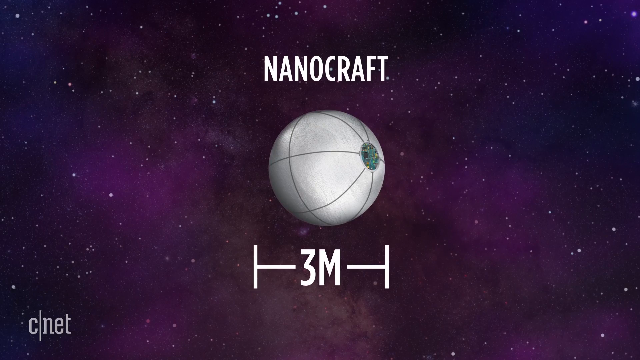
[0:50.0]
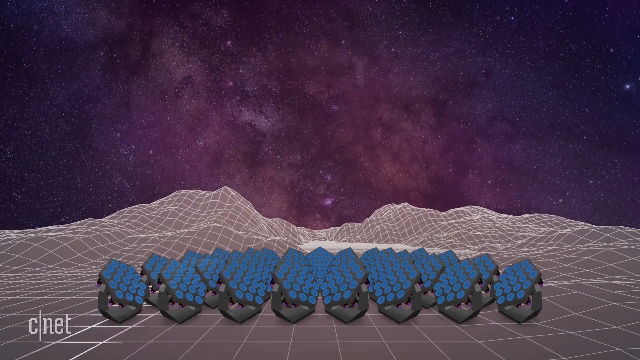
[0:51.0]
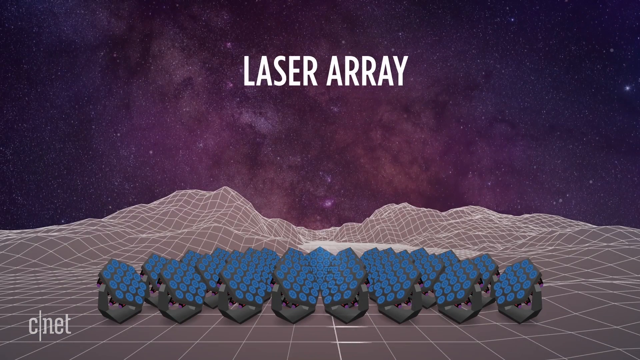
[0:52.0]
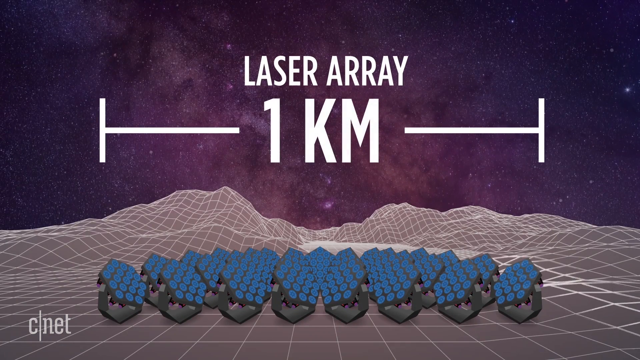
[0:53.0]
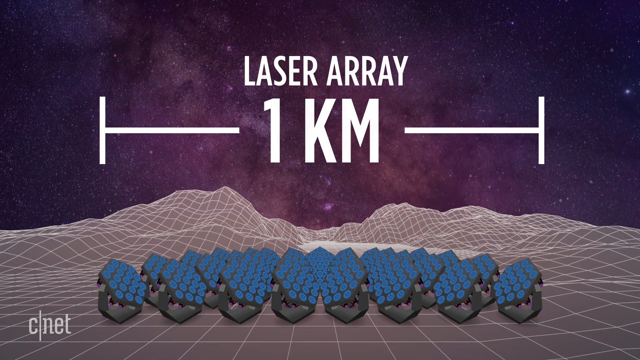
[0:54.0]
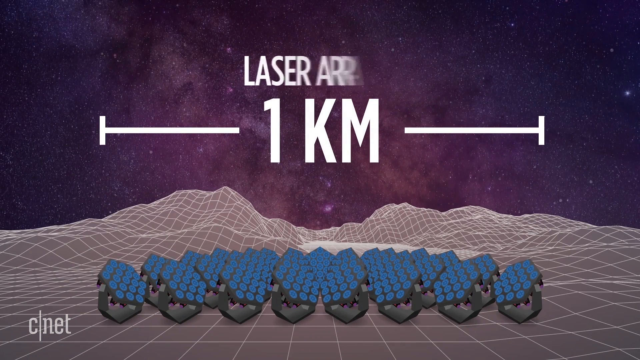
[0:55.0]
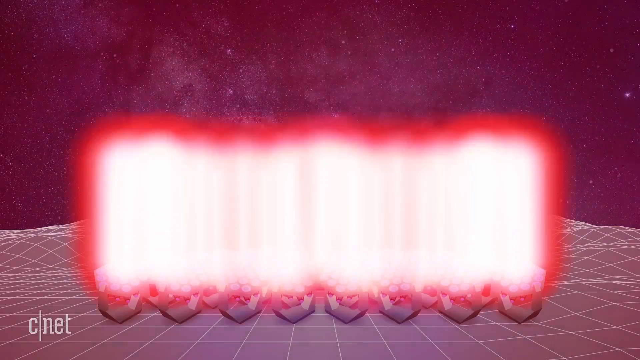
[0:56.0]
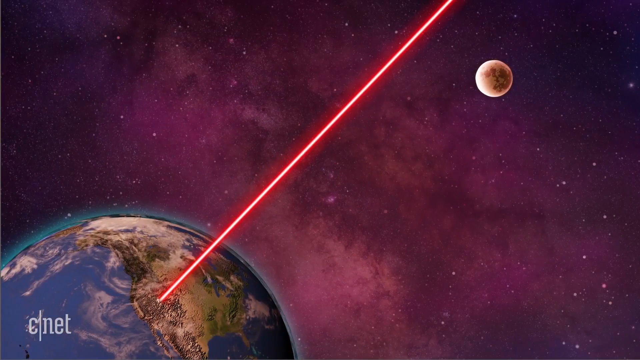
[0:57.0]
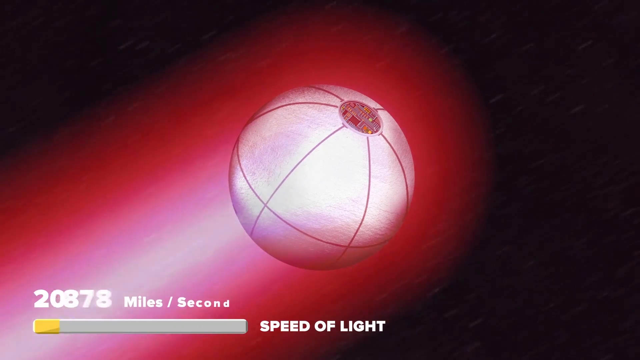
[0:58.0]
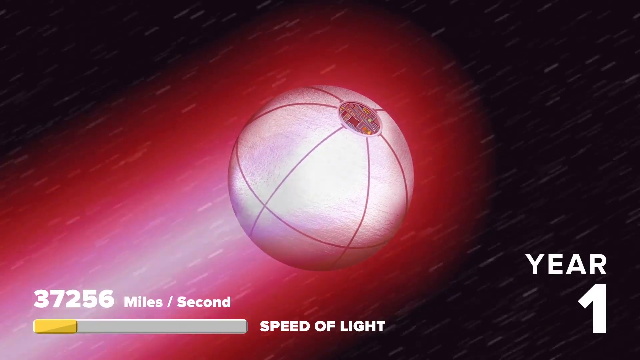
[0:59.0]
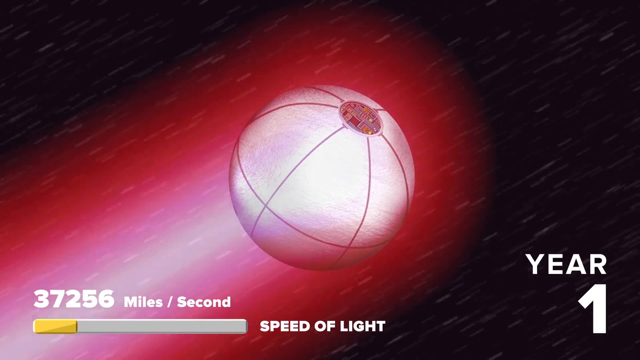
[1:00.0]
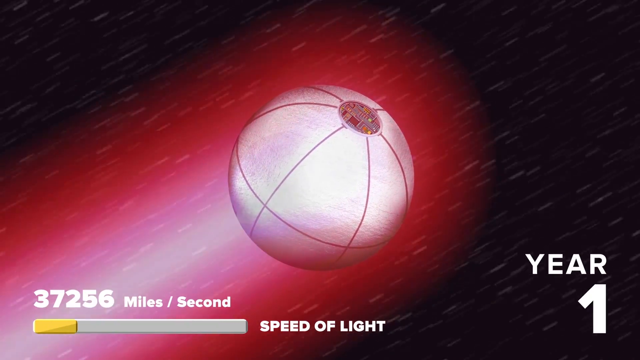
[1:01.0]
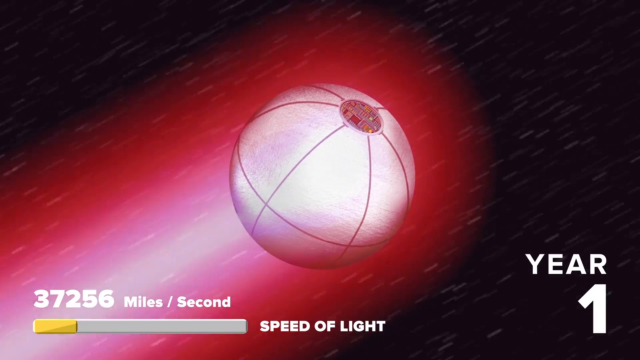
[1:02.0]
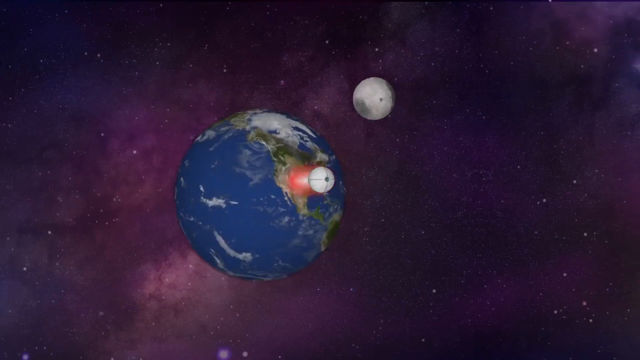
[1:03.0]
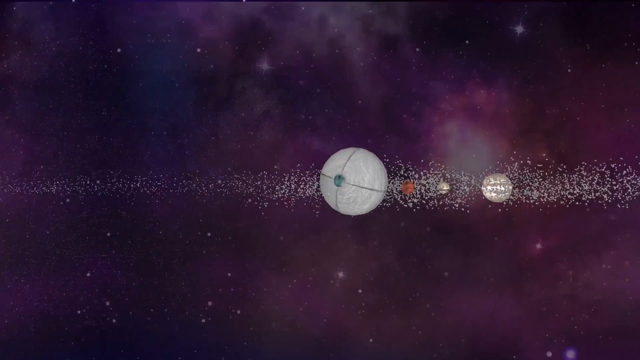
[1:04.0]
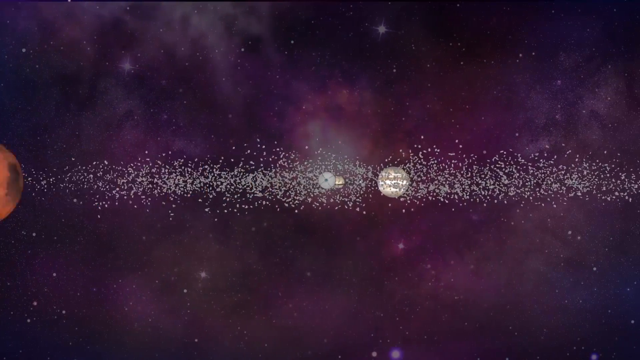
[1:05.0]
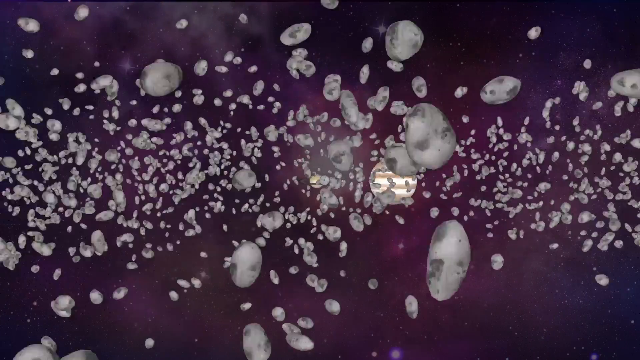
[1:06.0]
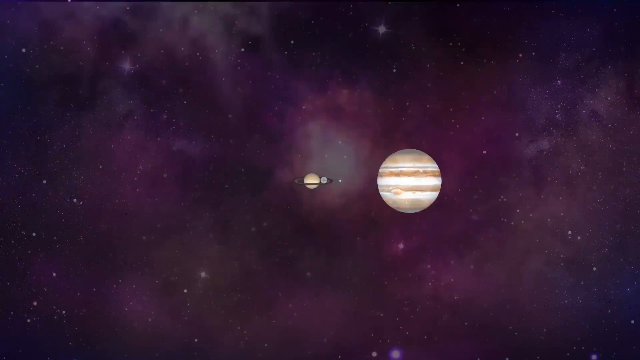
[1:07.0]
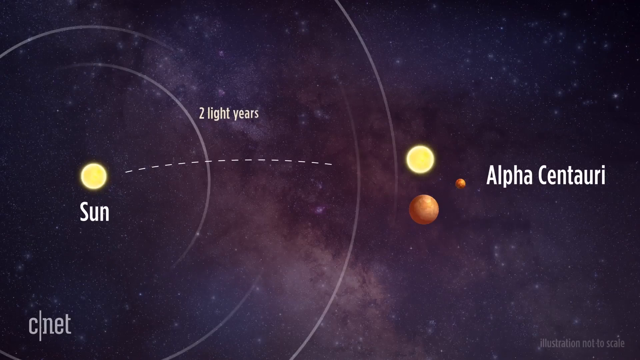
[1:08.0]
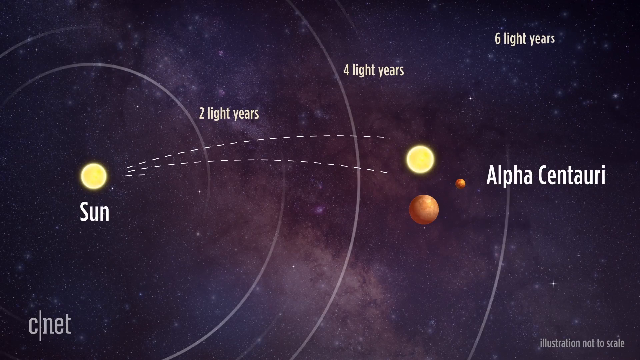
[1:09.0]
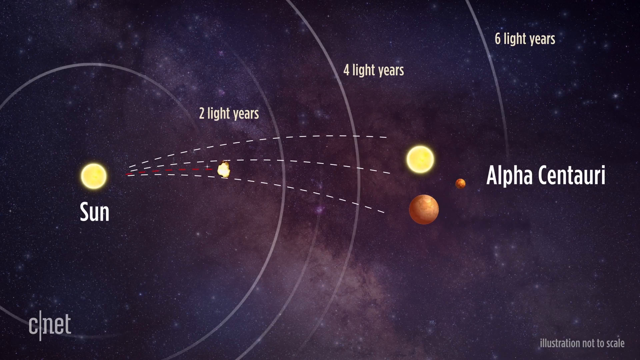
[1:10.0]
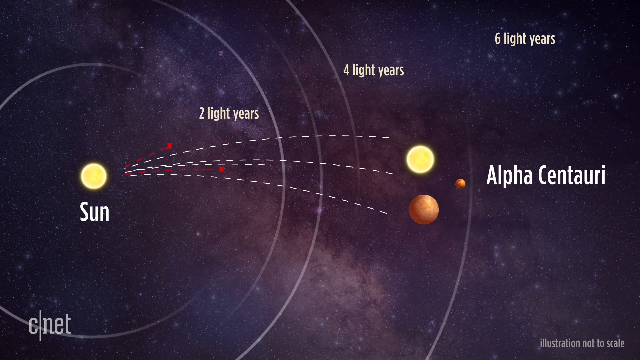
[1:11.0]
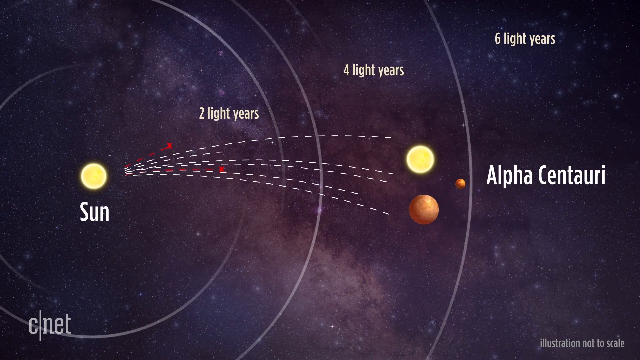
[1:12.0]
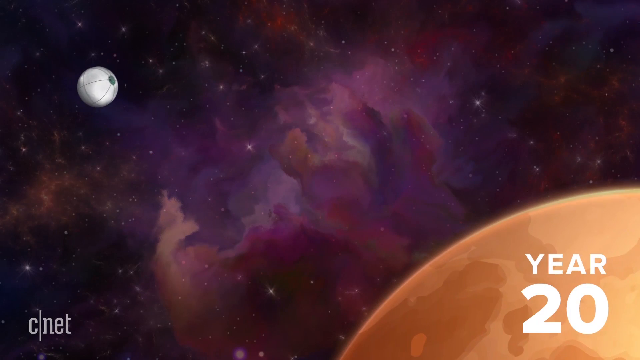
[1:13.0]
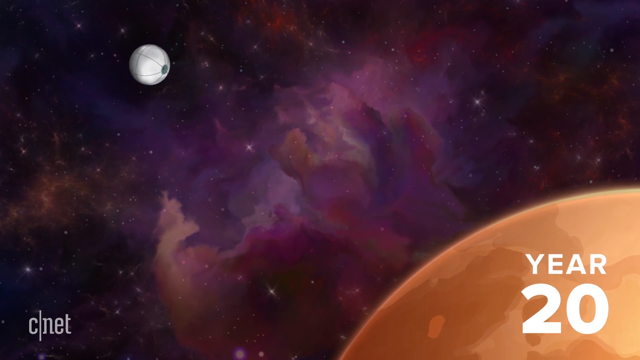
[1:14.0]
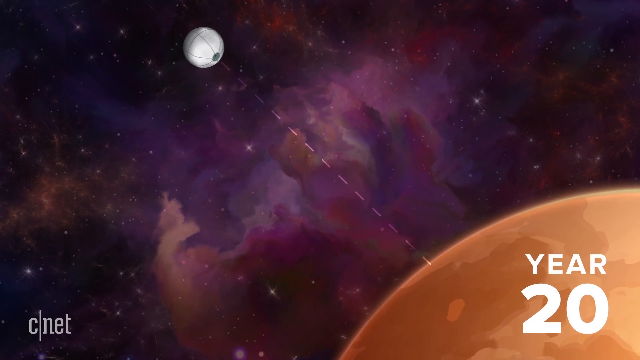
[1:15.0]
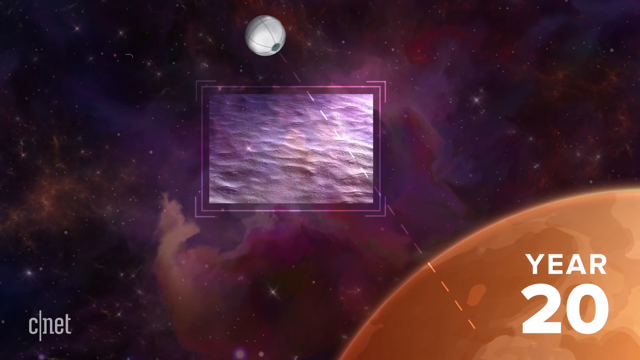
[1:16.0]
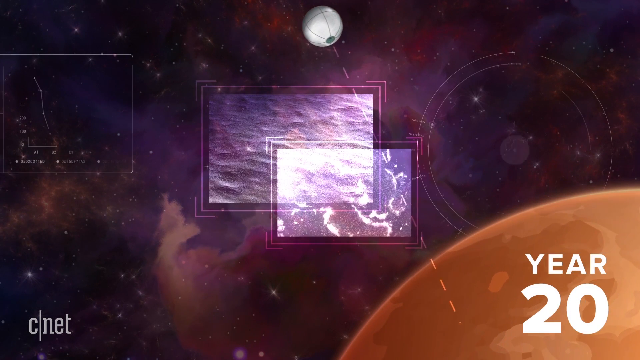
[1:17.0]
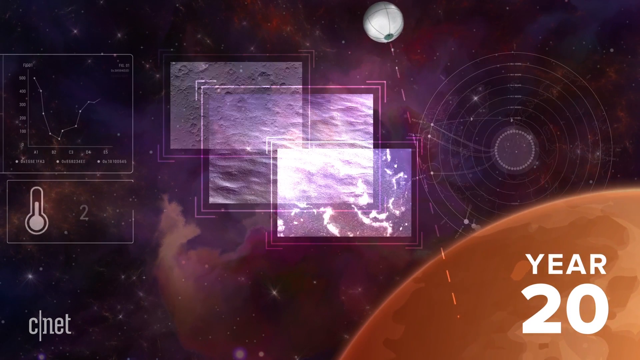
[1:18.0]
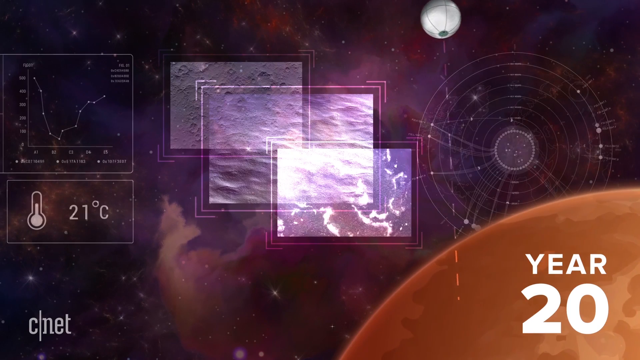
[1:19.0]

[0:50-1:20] Something called a nanocraft is shown being measured at three meters. It is a ball with a sort of green top into which all the lines center. Next, something called a laser array appears: basically solar panels all lined up and gathered right next to each other in a pack, measured at one kilometer. They seem to be gathered on the Earth's surface, and they all point upward toward space and shoot some sort of ball into the air. All the laser power goes to the ball and makes it fly at the speed of light. At the bottom left, its speed is shown as "37,256 miles per second," and at the bottom right the text reads "year one," possibly showing the path it traveled during the first year.